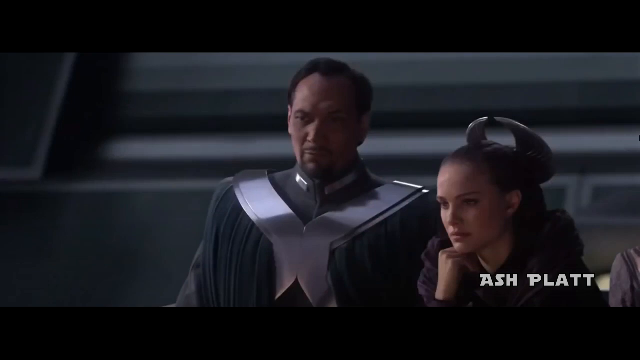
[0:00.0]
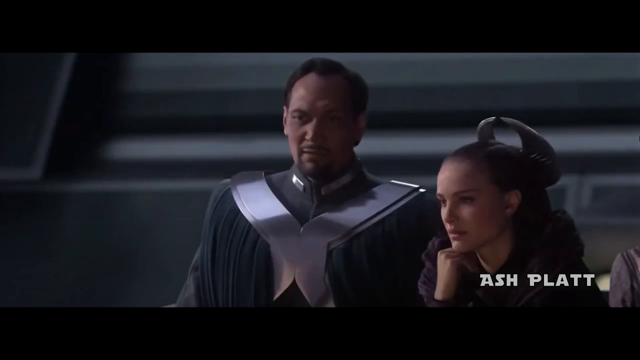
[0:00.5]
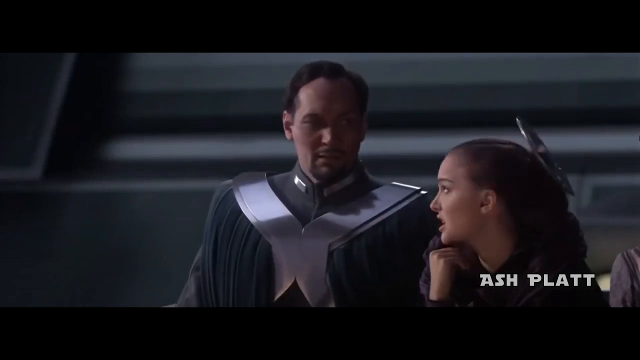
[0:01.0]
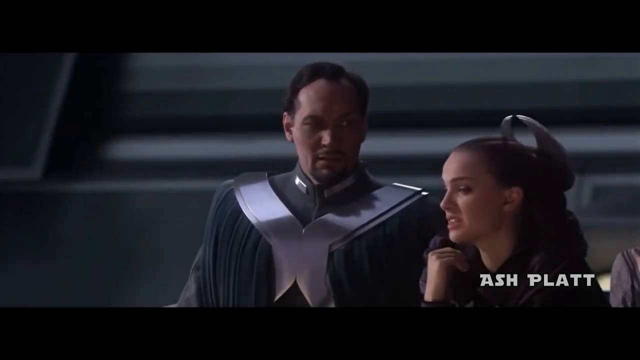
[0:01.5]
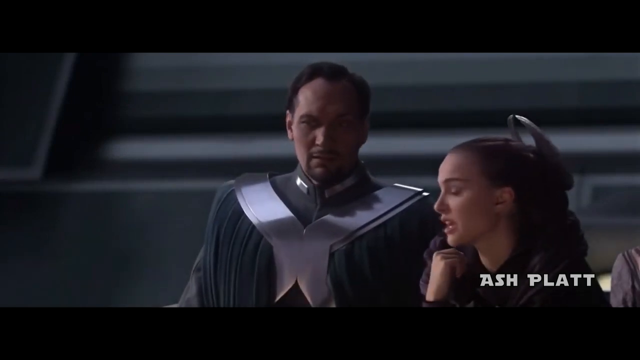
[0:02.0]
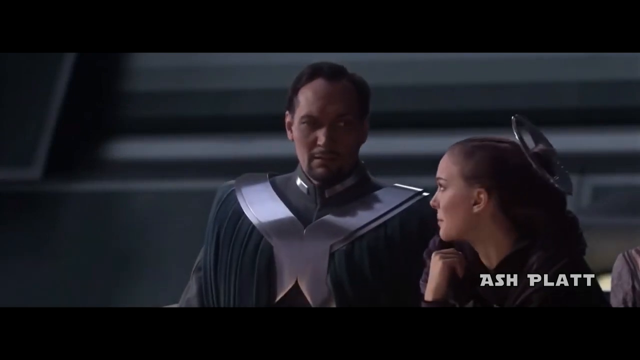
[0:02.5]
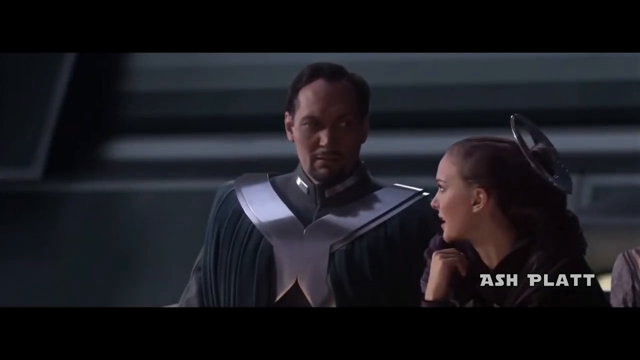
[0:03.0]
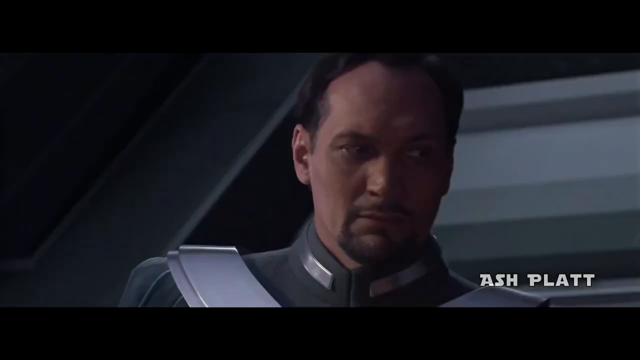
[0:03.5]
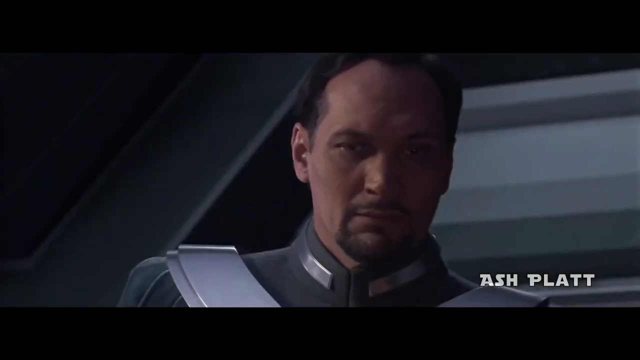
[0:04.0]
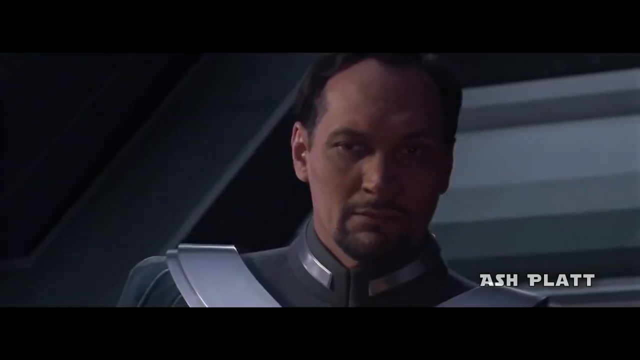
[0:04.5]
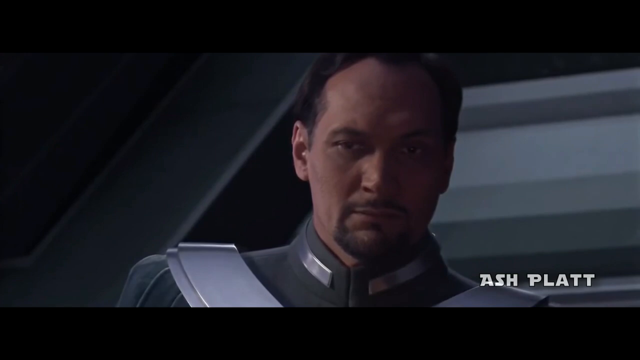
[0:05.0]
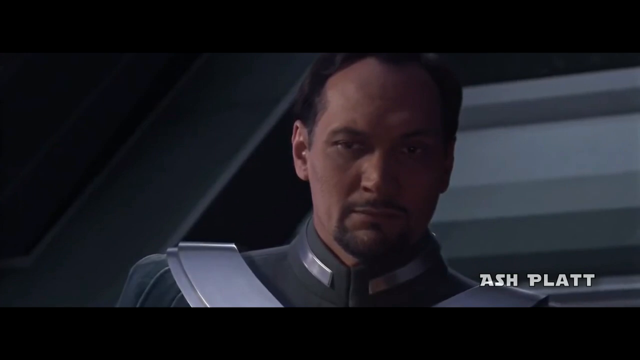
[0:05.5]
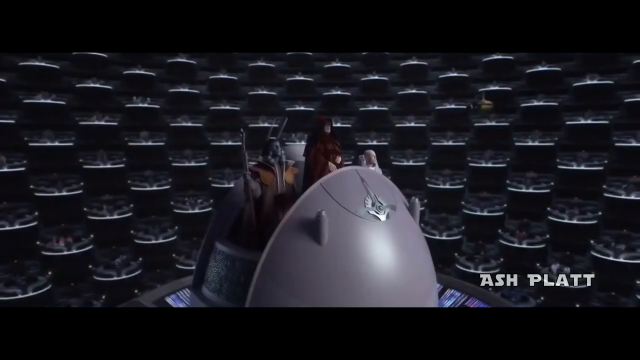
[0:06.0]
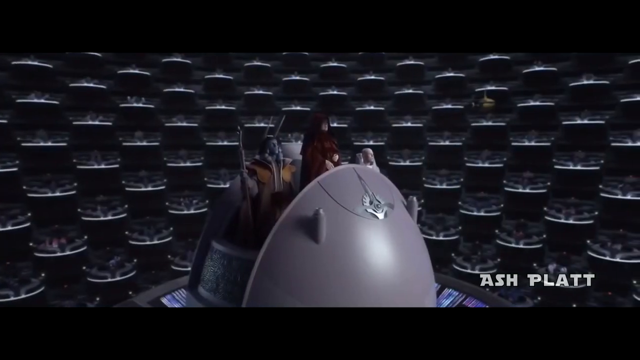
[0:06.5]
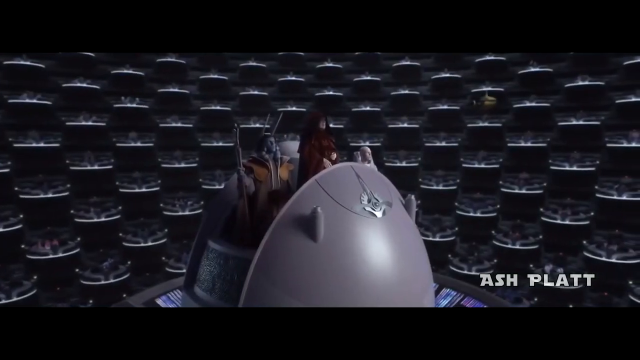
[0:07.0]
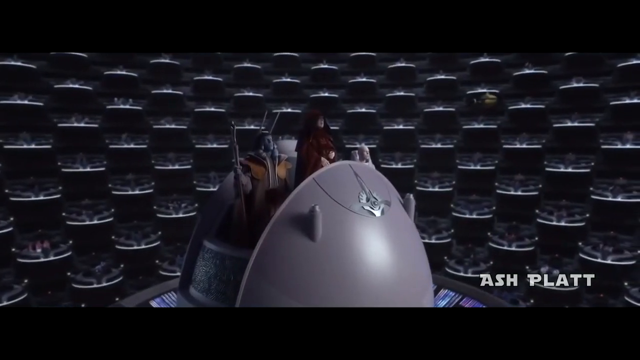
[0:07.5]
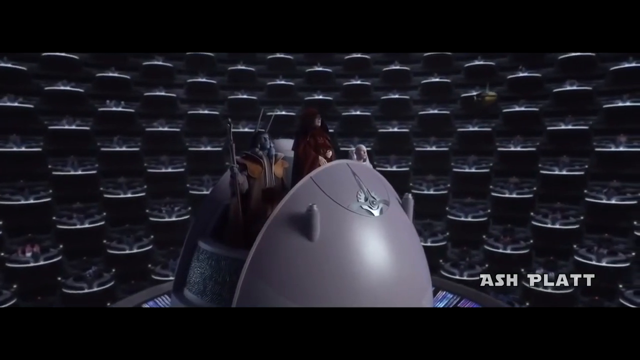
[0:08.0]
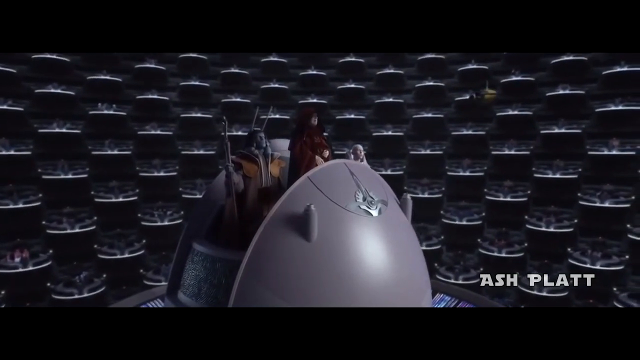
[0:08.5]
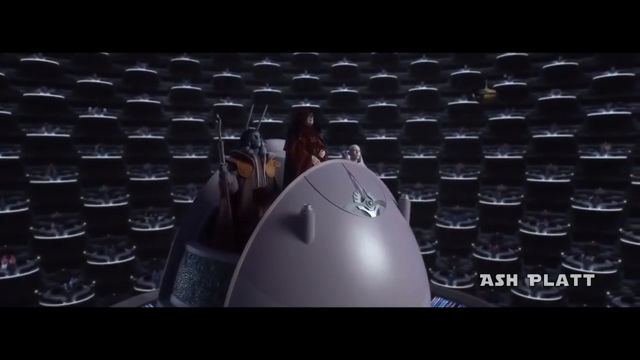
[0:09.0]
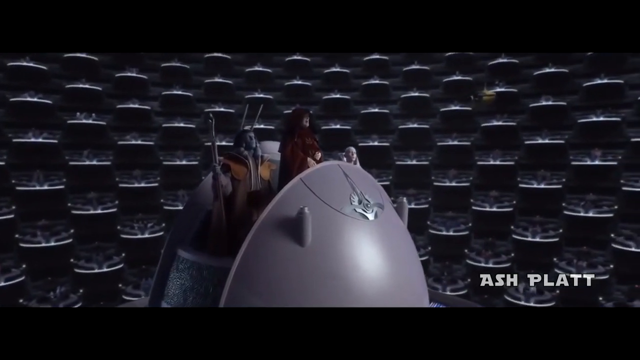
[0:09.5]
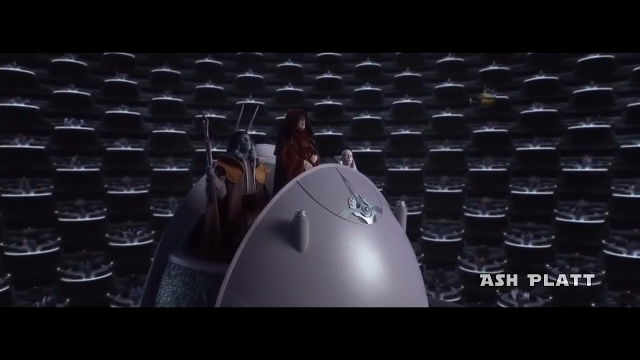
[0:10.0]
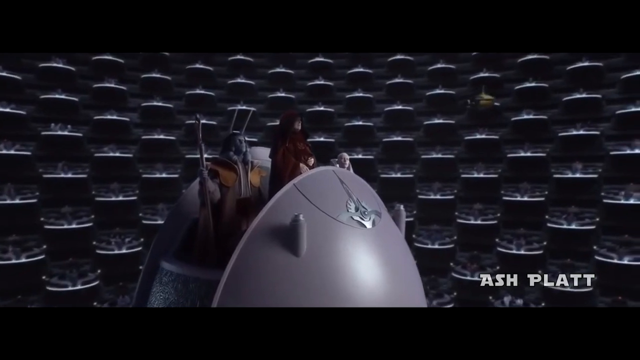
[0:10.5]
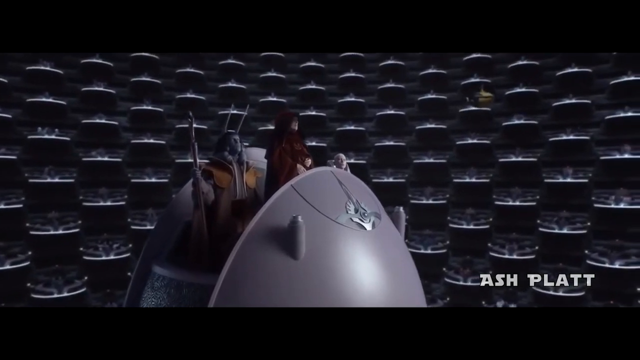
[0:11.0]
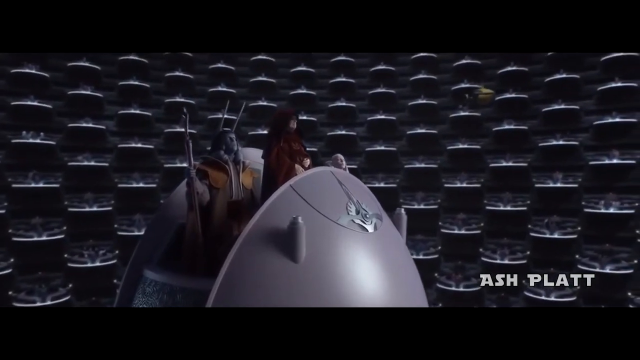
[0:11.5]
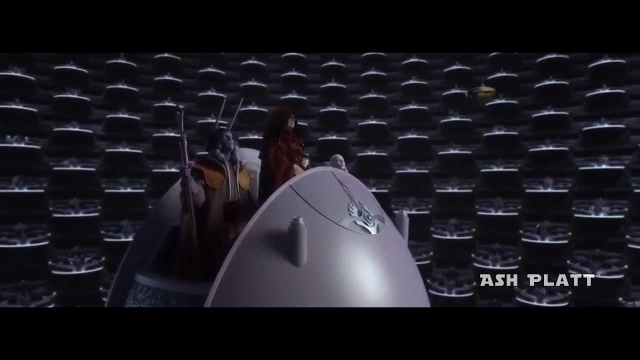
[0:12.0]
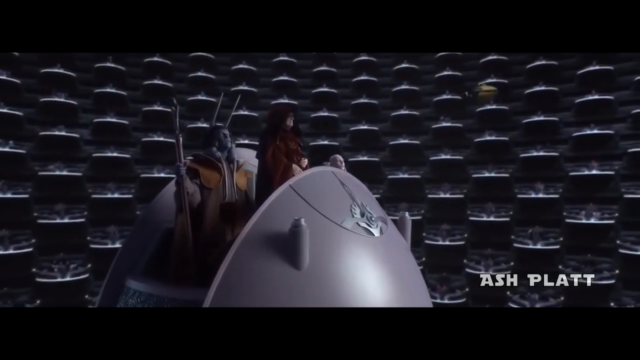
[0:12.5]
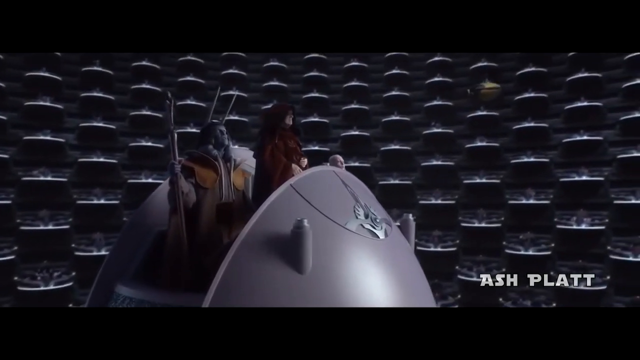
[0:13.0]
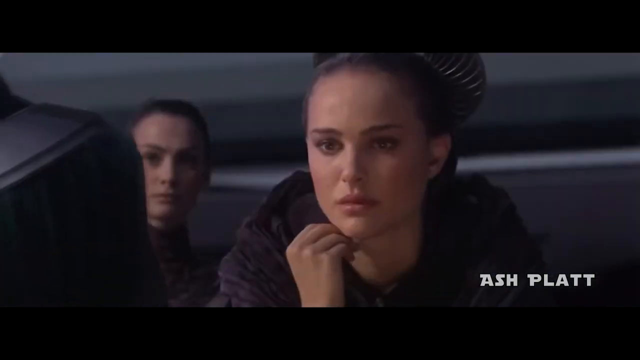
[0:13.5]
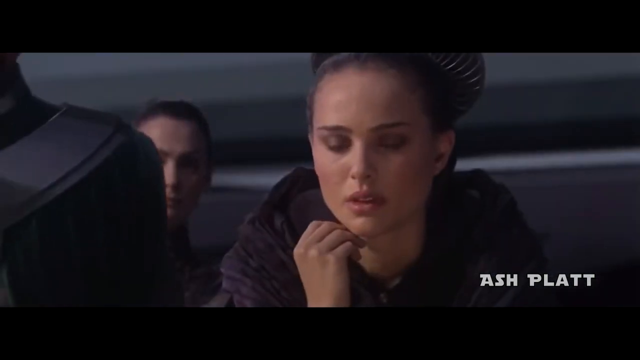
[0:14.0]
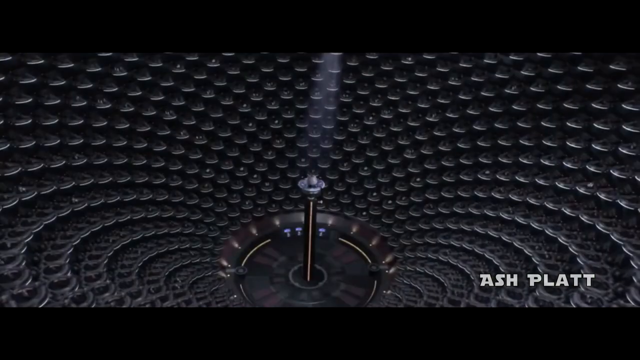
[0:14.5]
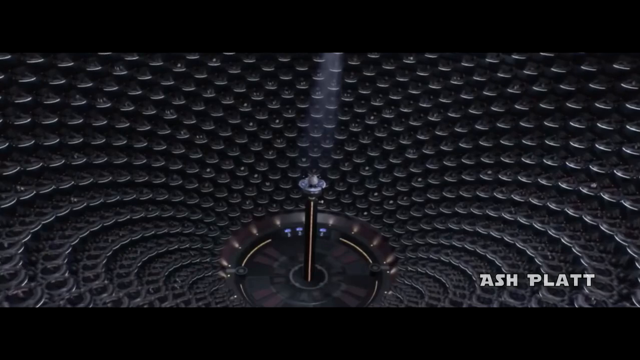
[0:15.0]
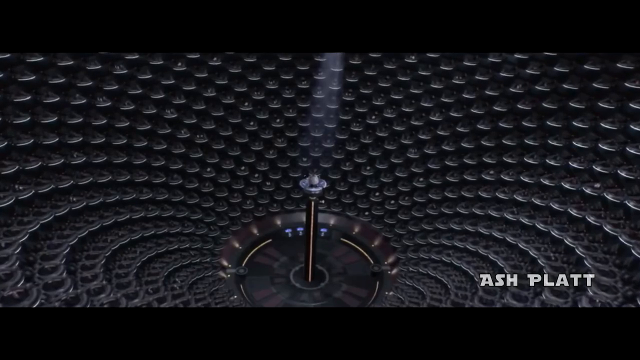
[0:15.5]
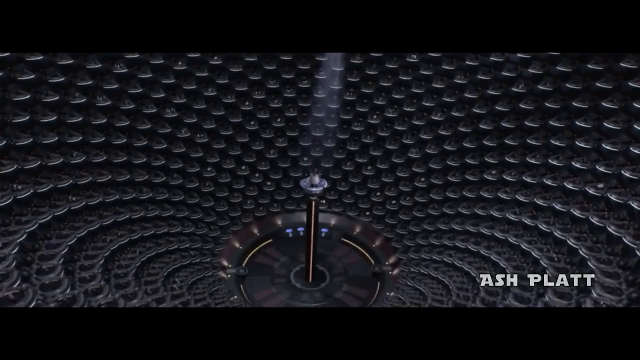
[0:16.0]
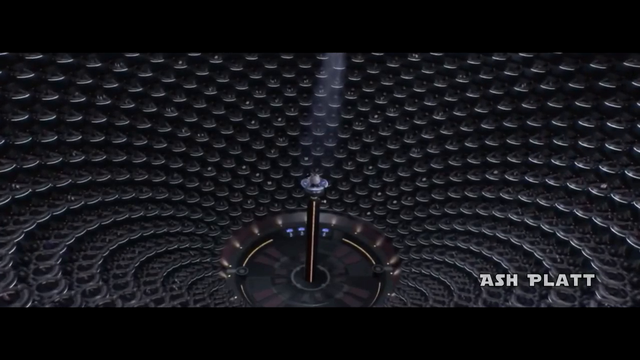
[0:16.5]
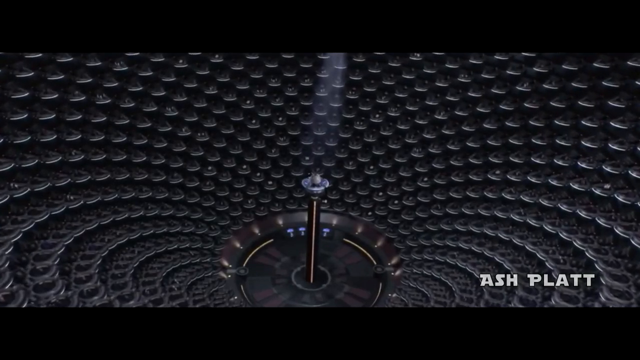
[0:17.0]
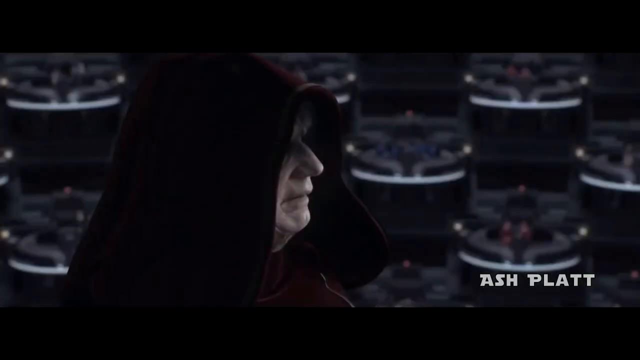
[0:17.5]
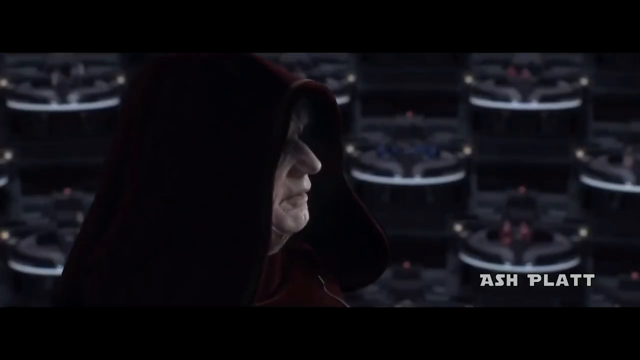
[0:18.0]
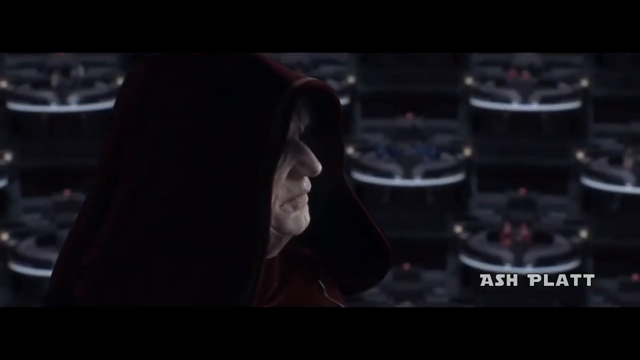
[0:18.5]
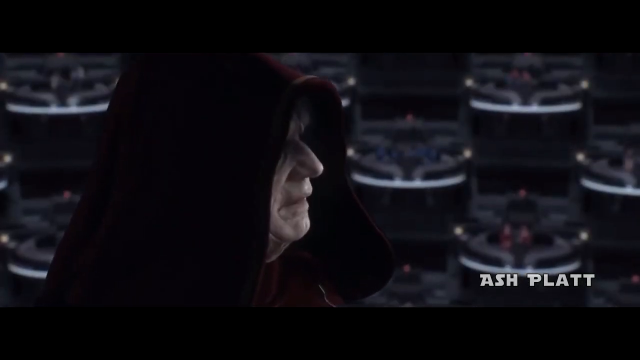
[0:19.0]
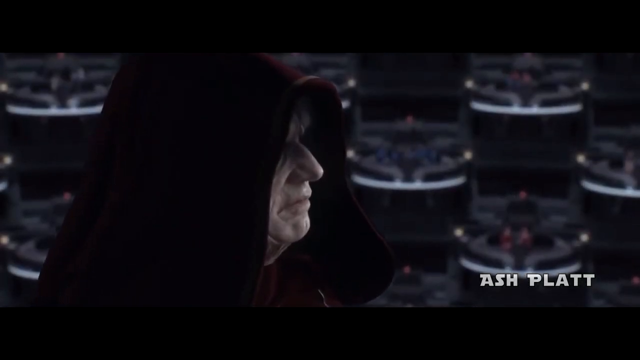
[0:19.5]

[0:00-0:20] A Caucasian man with black hair wears a black robe with a silver X shape across the collar and front of his chest. Next to him is a Caucasian woman with her hand resting against her chin; she has a metallic object on top of her black hair. The man speaks and the woman turns her head to face him. As she speaks, she turns her head forward and towards the man. A close-up then shows the man as he listens to the woman speak. The scene transitions to a chamber-like object in the middle of a room with three figures inside. One is grey and wears a brown robe, and another, more prominent and standing at the front, wears a red robe. The man in the red robe is seen speaking. The other figure in the chamber-like pod is a grey humanoid with a bald scalp. The video cuts to the woman with her right hand against her chin as she gasps. Another transition shows the entire room, with seats shaped like pods and a spotlight on the central podium where the chamber sits. The video zooms in on a pale man in a red robe with a hood over his head.